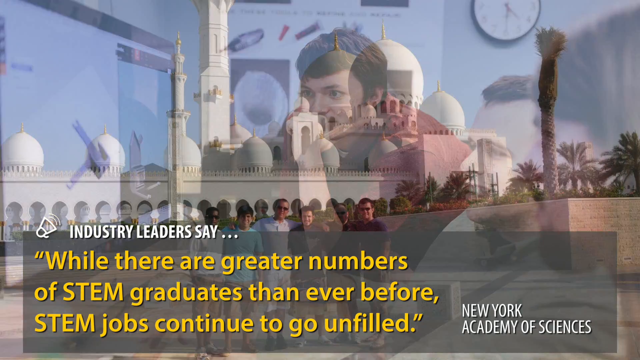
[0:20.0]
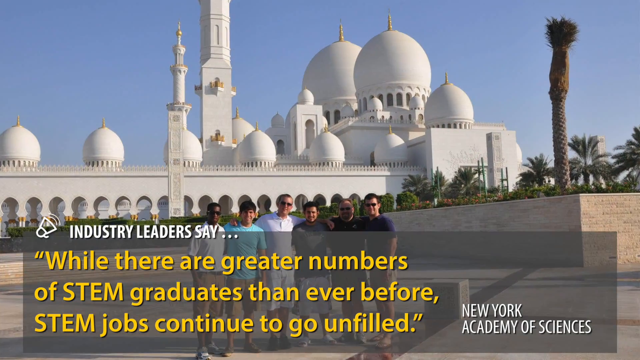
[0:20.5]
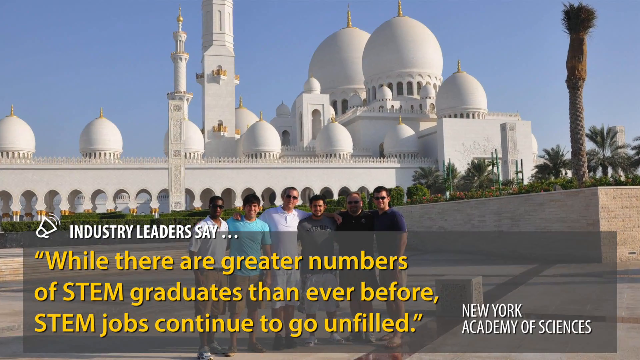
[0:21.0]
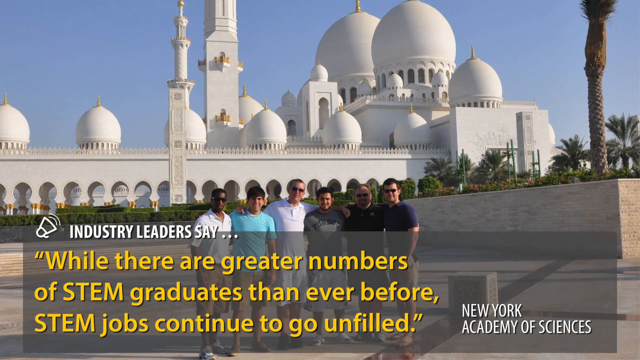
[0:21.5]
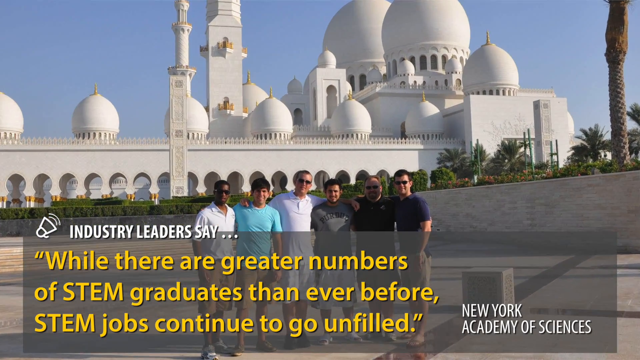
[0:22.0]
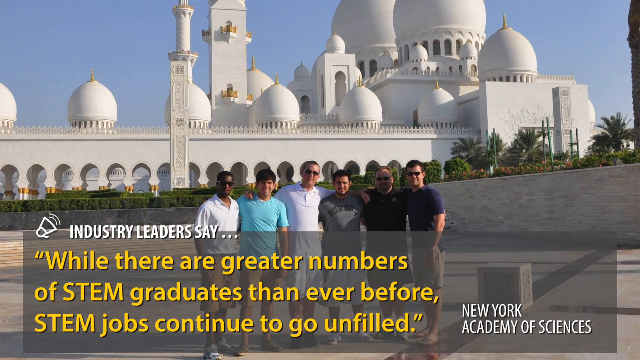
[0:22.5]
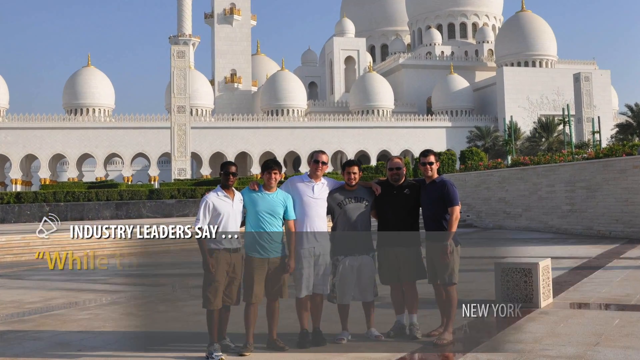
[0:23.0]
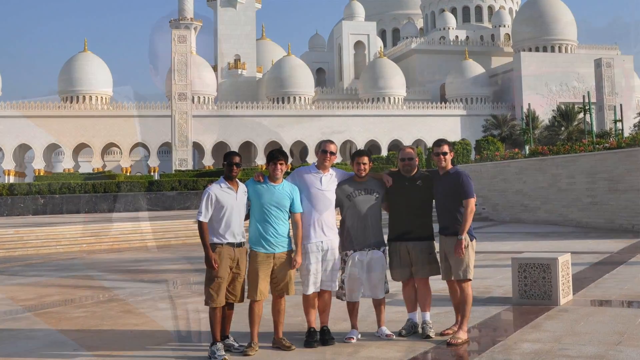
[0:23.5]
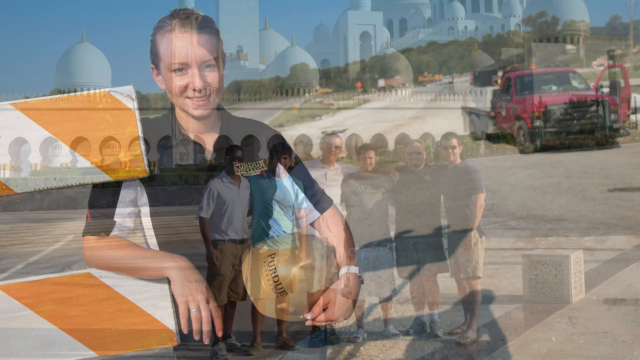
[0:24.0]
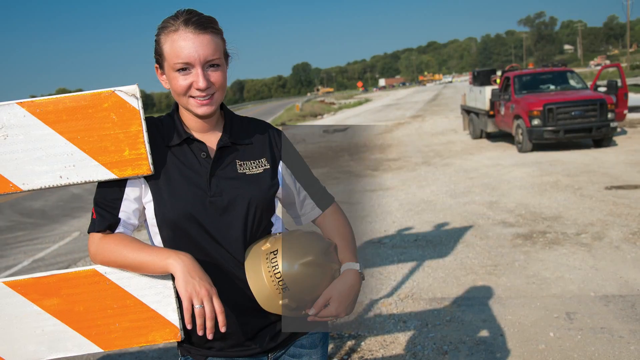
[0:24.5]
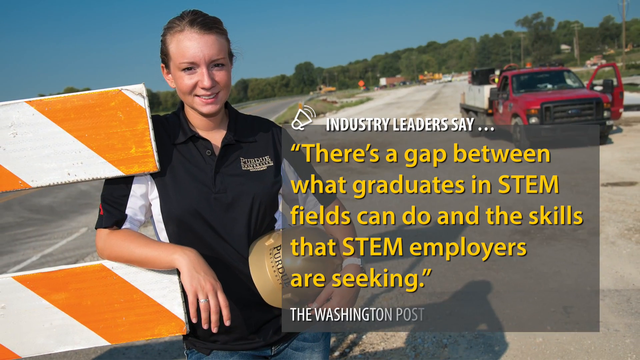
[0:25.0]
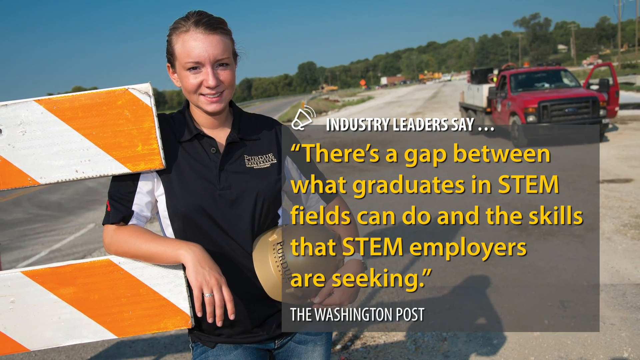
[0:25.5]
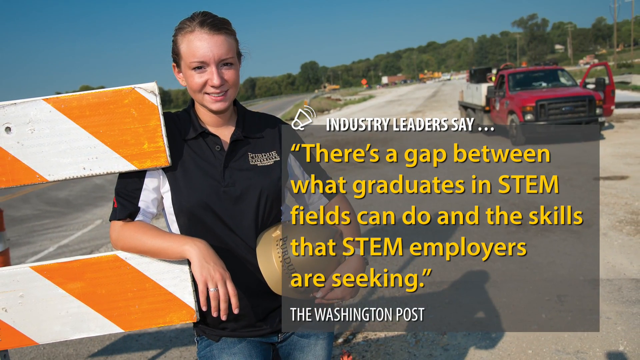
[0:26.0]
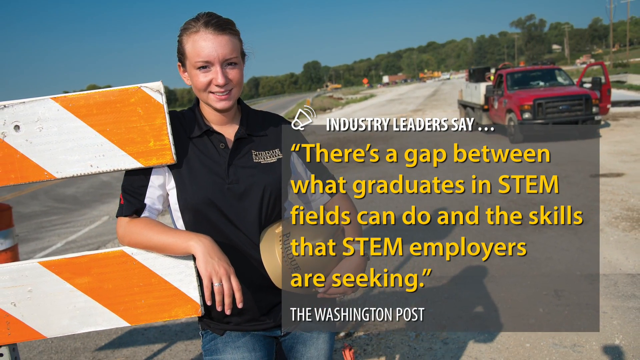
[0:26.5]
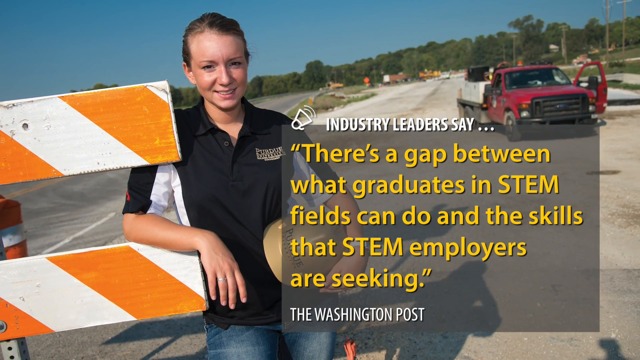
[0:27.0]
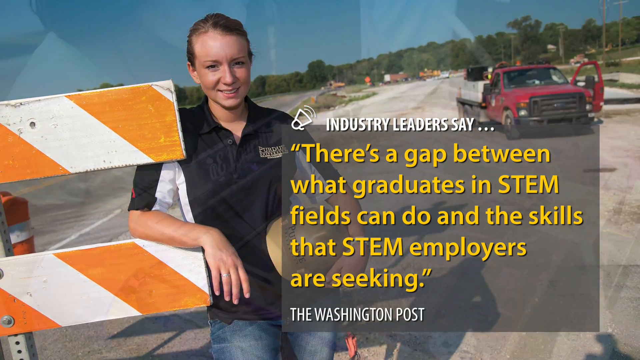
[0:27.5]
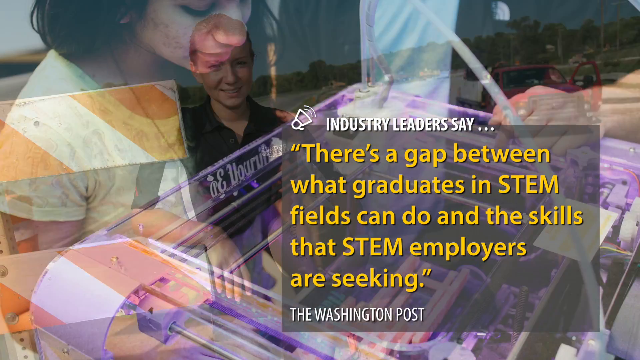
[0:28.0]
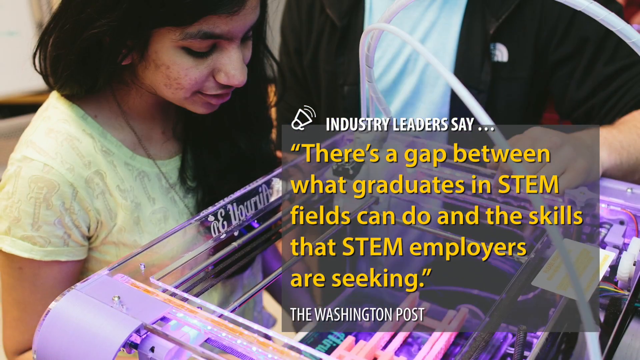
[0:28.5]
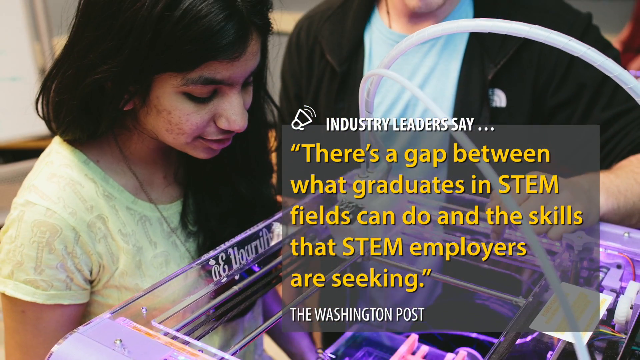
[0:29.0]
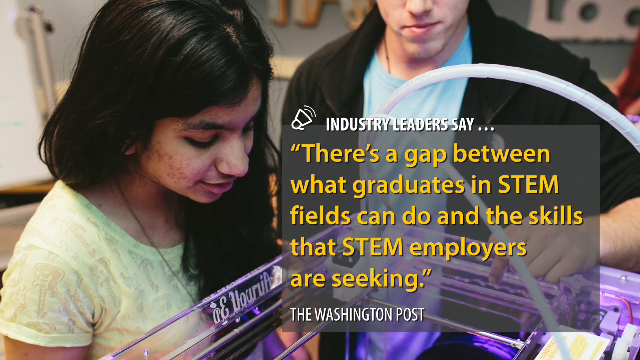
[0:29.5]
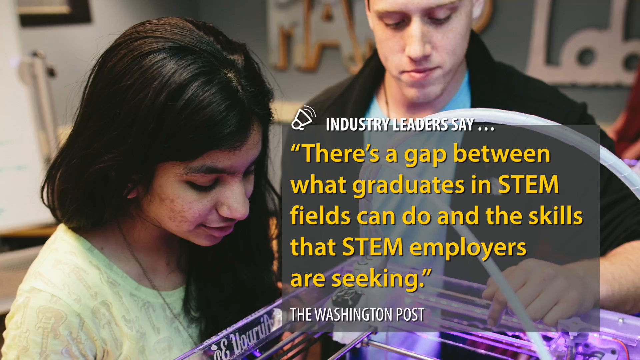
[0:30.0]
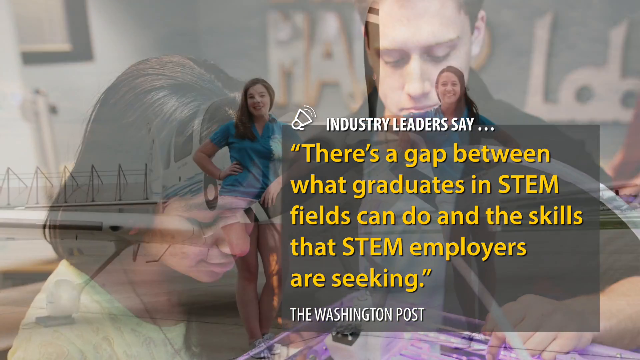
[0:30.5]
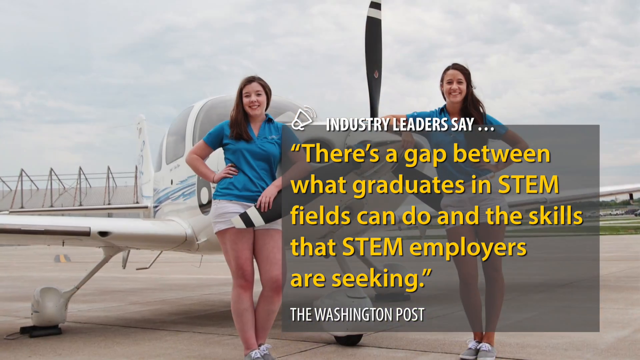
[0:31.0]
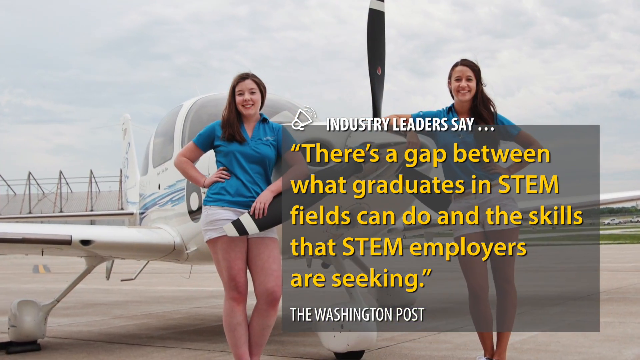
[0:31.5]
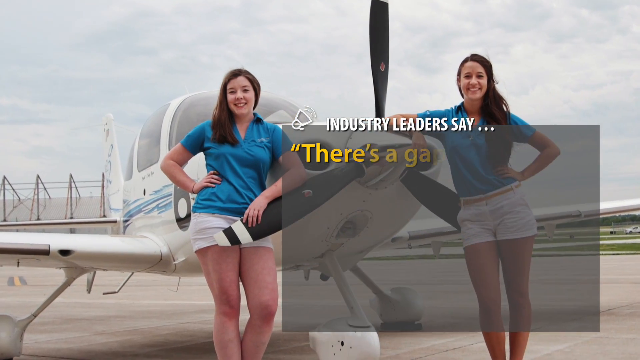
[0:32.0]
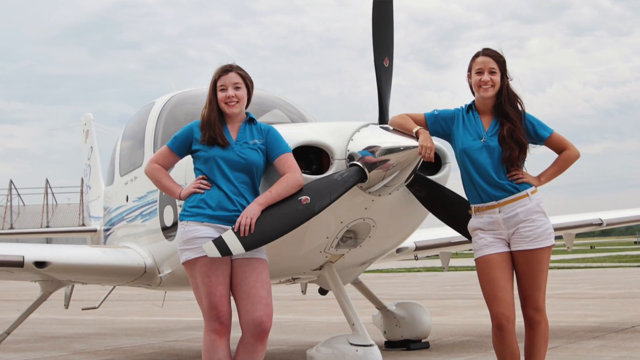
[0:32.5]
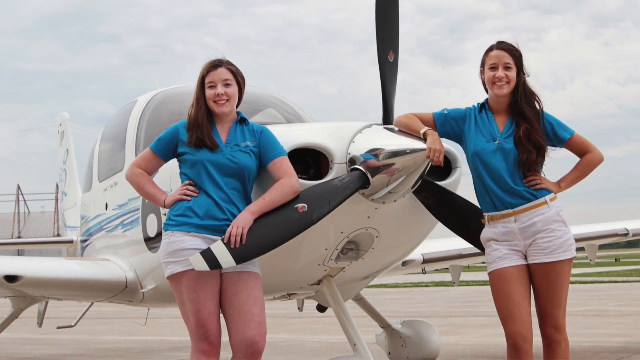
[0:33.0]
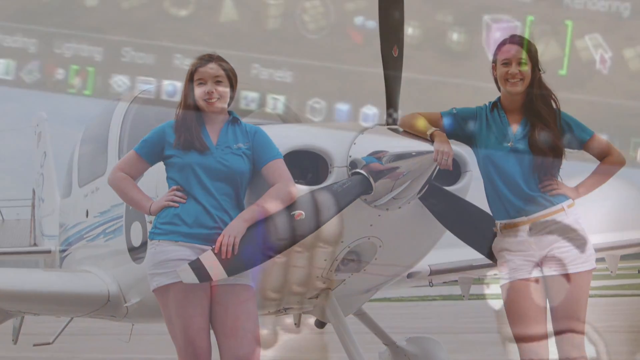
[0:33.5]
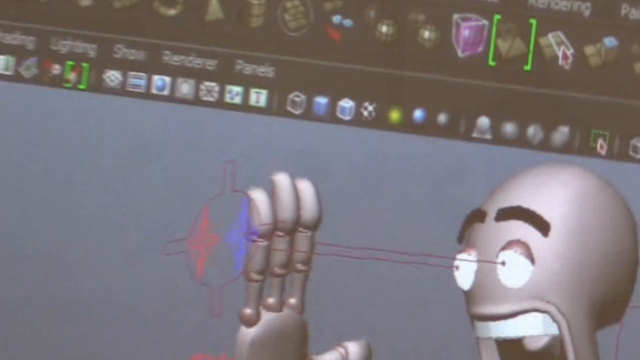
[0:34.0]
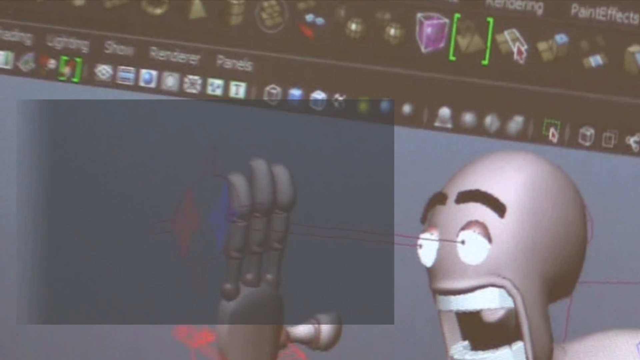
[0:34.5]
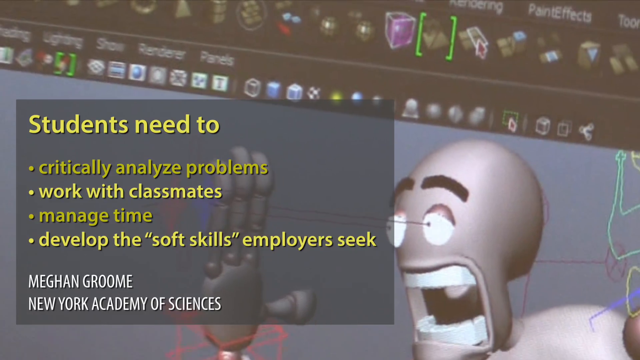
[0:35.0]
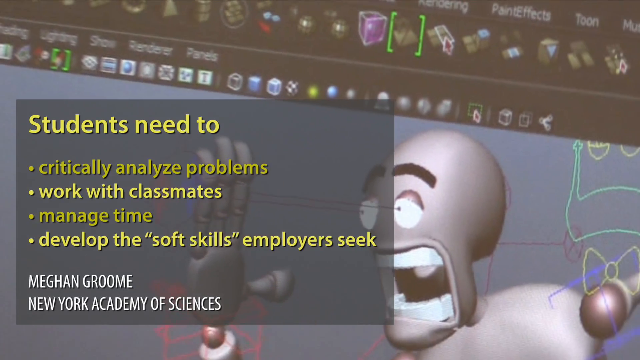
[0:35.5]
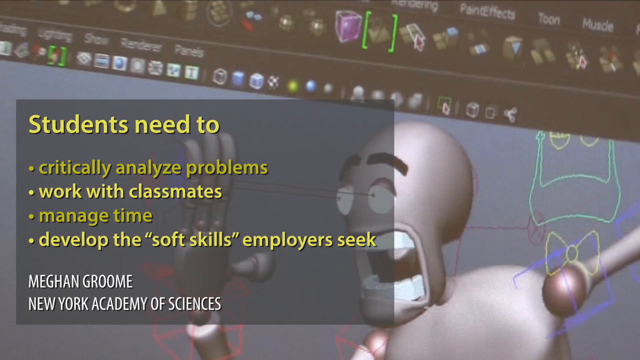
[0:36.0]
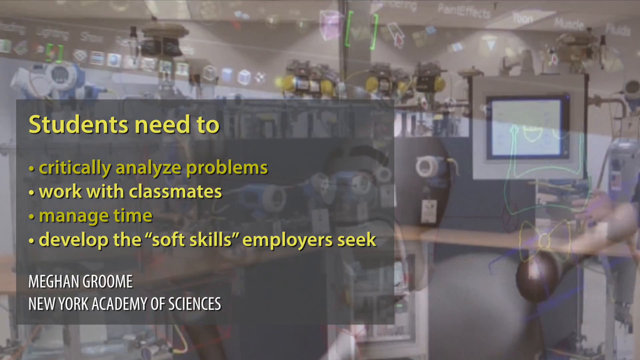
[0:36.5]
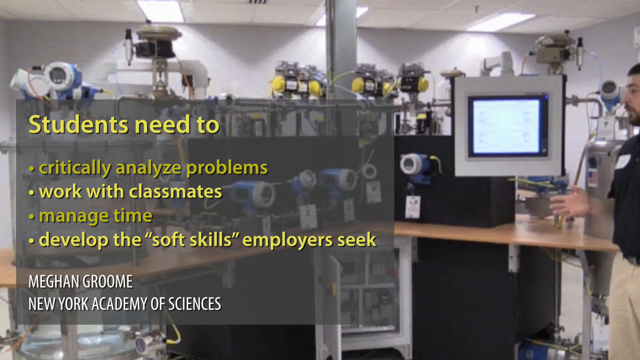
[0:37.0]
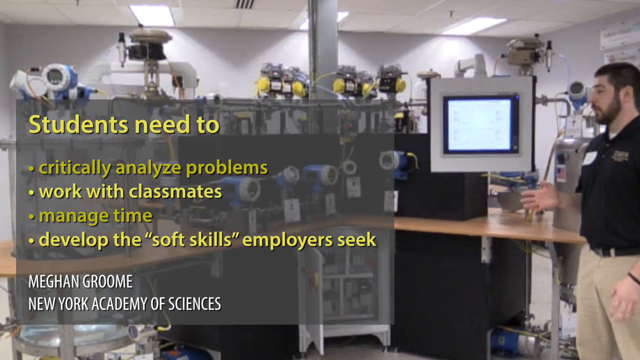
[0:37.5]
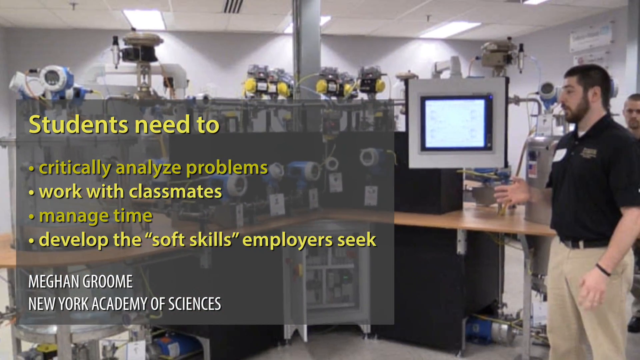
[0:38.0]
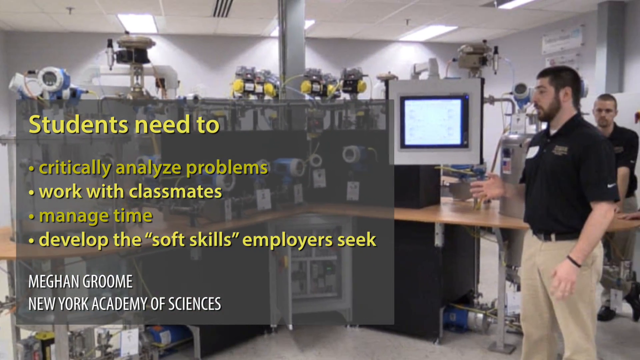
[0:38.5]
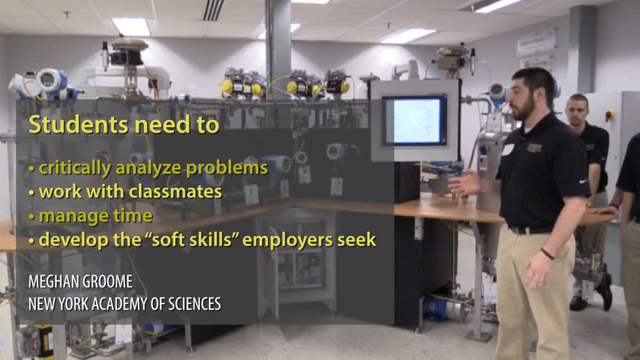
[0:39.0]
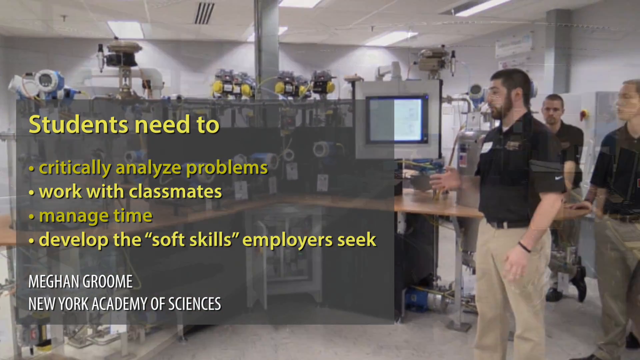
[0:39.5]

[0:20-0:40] Many pictures of students and other people appear in the background while text is shown. It reads "There's a gap between what graduates in STEM fields can do and the skills that STEM employers are seeking," attributed to The Washington Post as words from industry leaders. Next, text reads "students need to critically analyze problems, work with classmates, manage time, develop the soft skills employers seek," a sentence attributed to Meghan Groome from New York Academy of Science. The background photos include a construction worker, what appears to be a 3D printer, two airplane pilots with a small airplane, and a 3D CAD application.